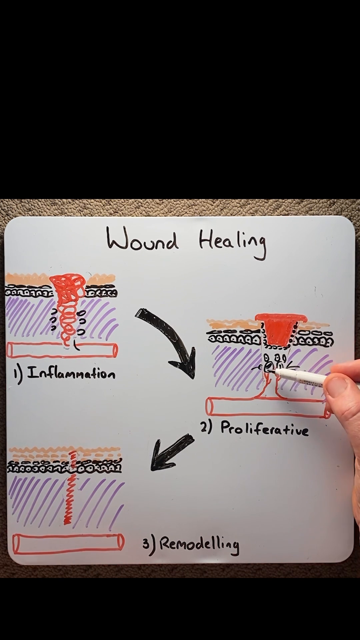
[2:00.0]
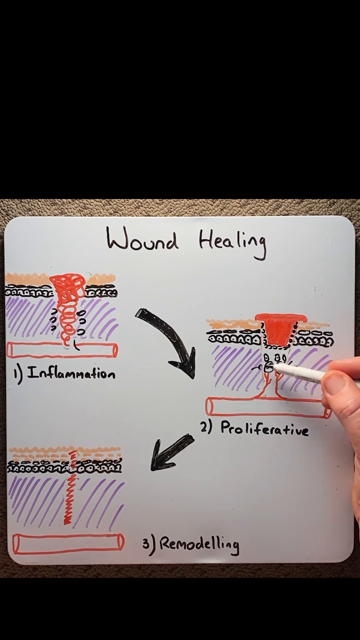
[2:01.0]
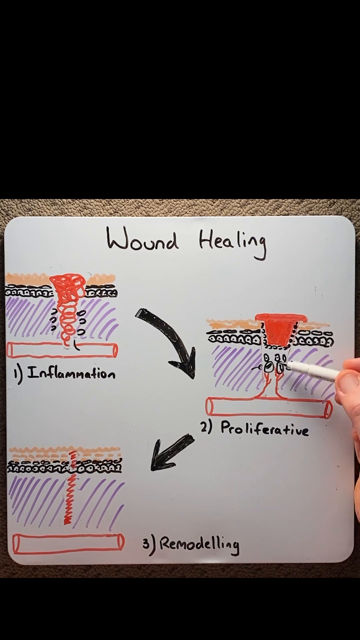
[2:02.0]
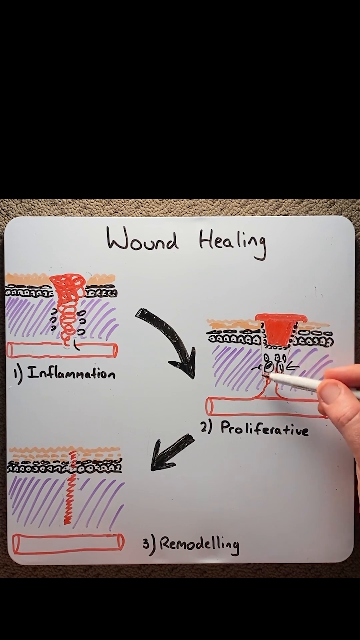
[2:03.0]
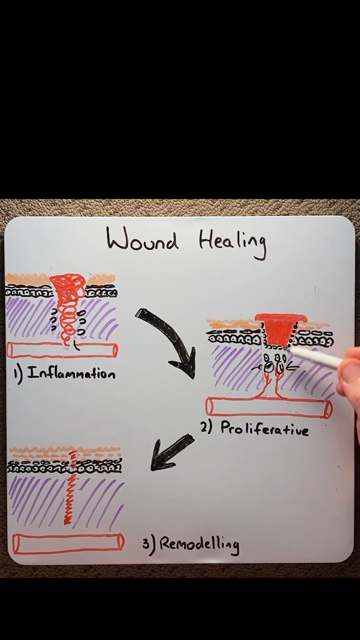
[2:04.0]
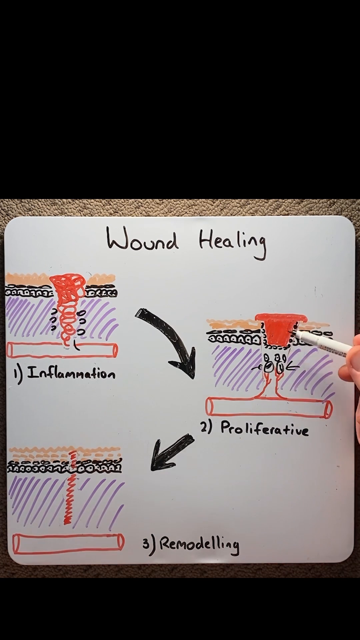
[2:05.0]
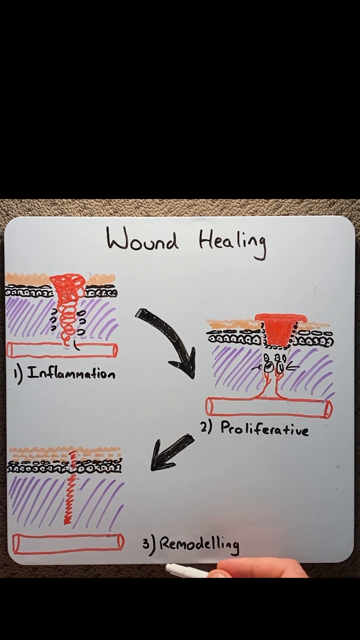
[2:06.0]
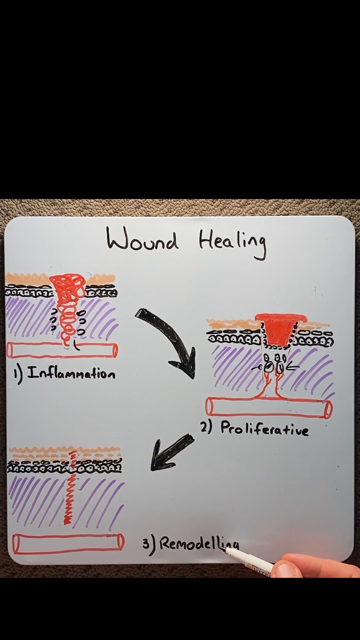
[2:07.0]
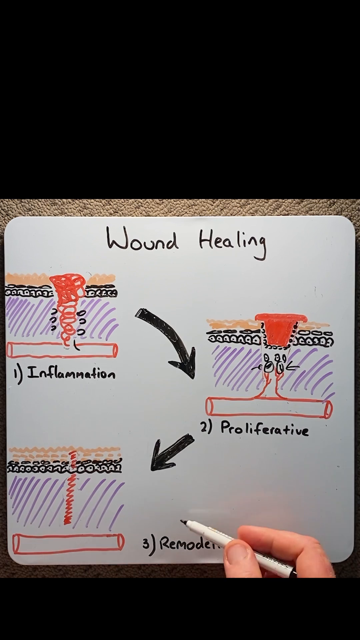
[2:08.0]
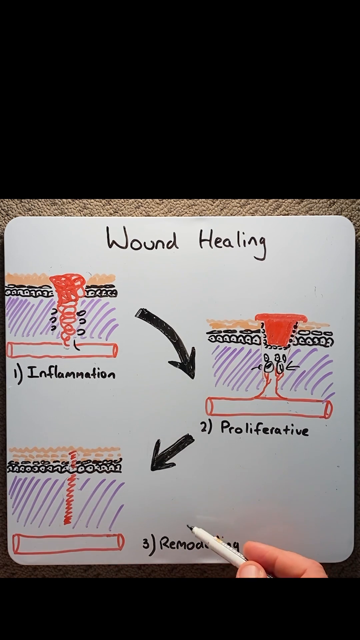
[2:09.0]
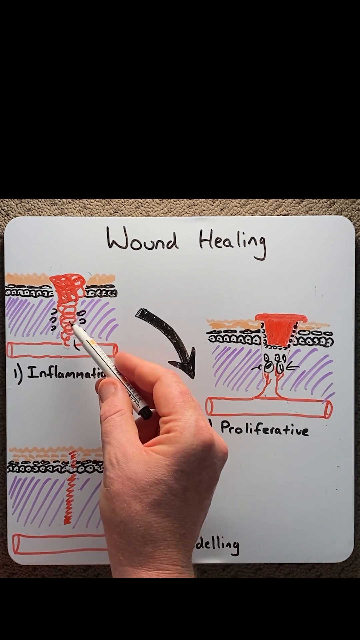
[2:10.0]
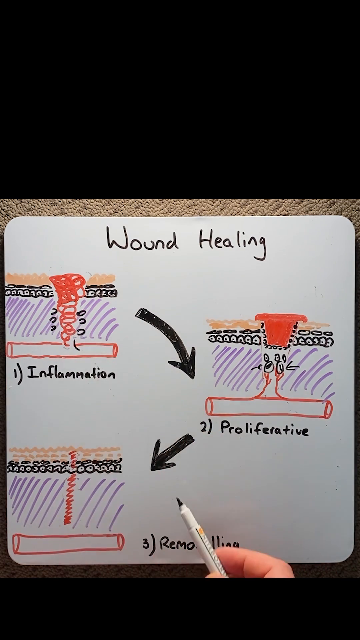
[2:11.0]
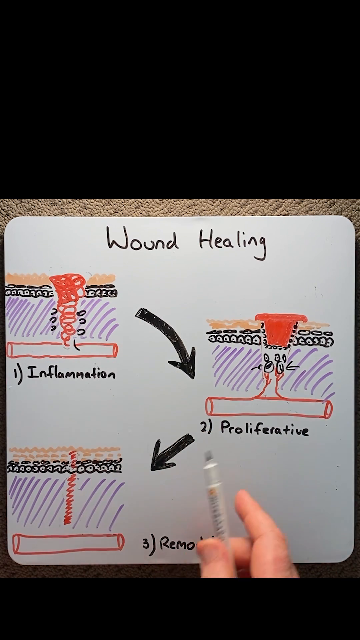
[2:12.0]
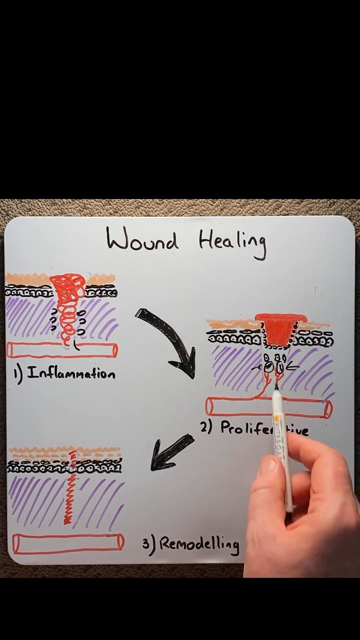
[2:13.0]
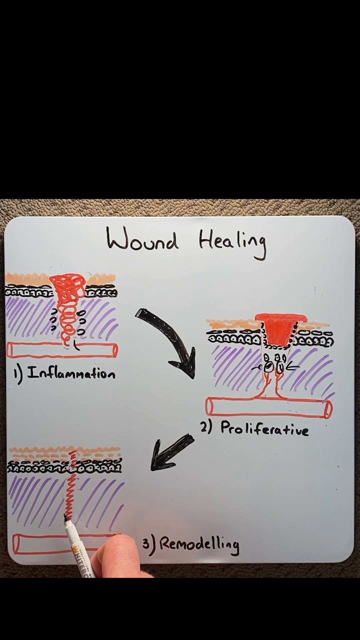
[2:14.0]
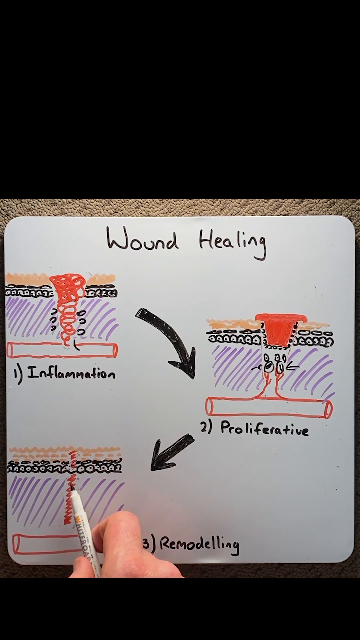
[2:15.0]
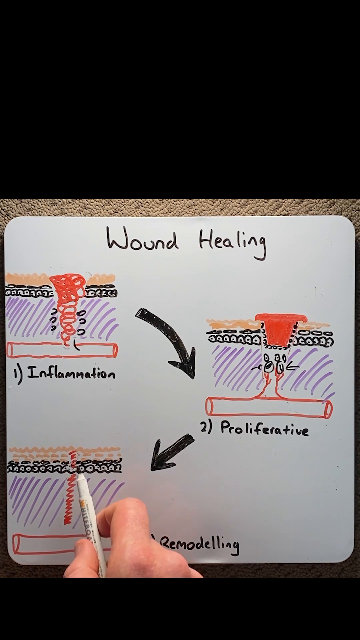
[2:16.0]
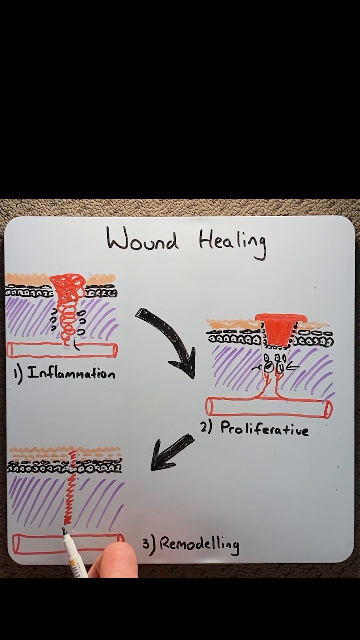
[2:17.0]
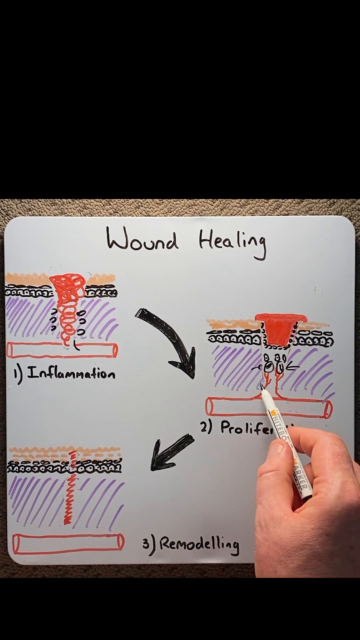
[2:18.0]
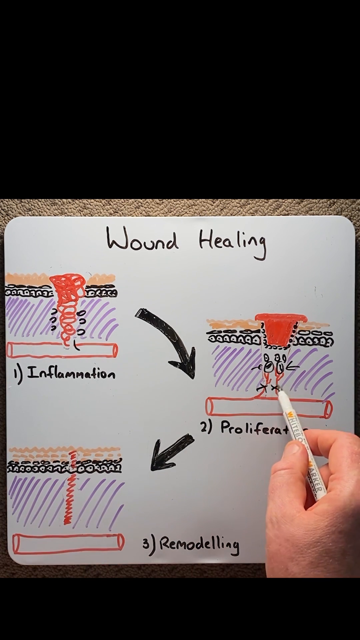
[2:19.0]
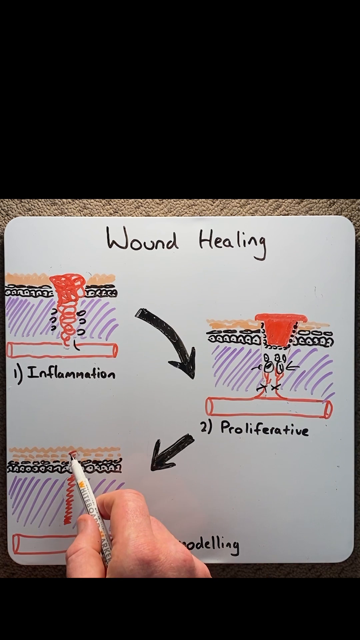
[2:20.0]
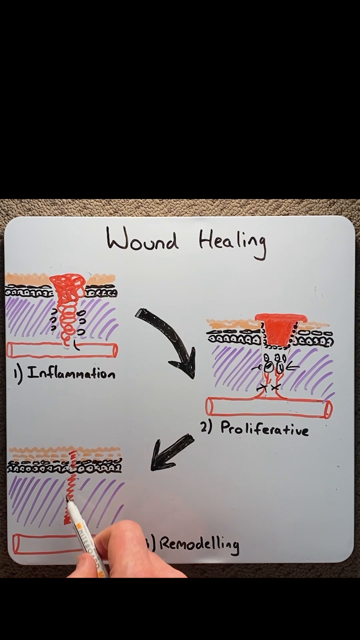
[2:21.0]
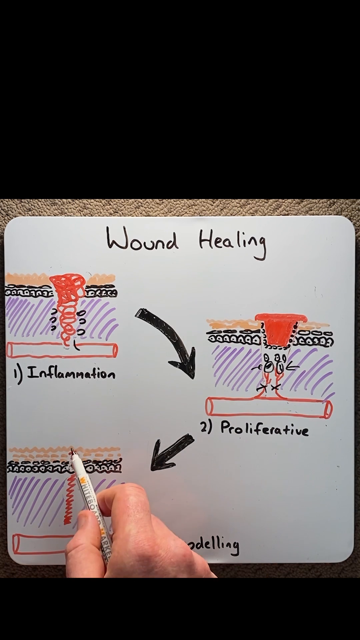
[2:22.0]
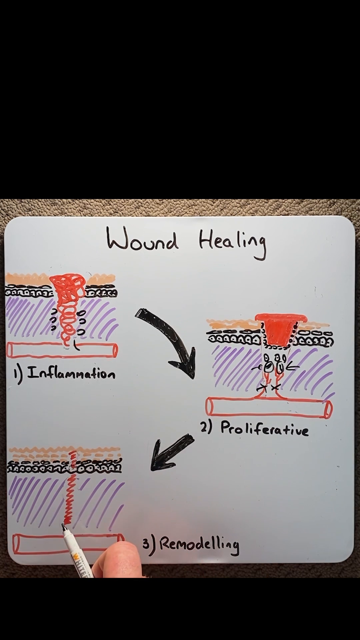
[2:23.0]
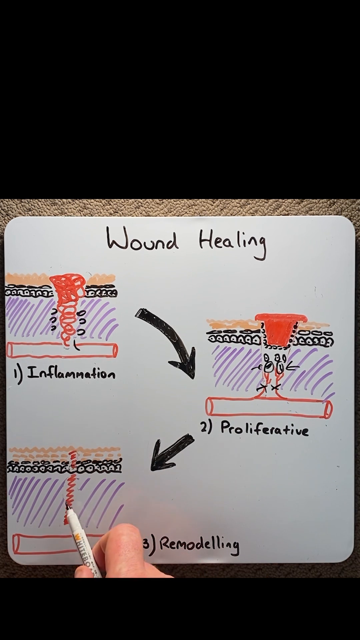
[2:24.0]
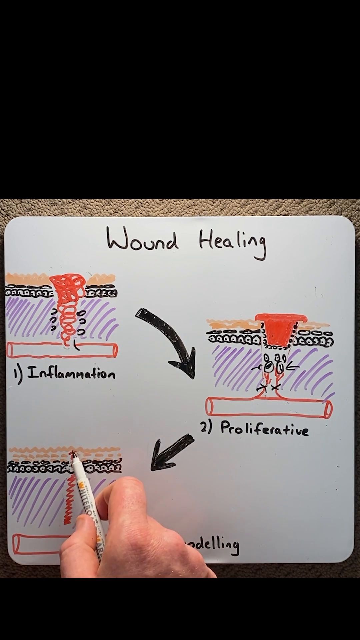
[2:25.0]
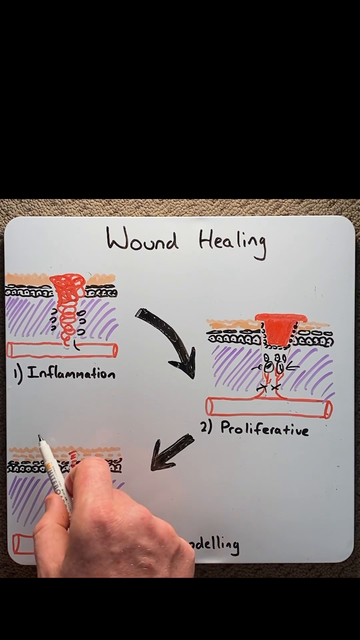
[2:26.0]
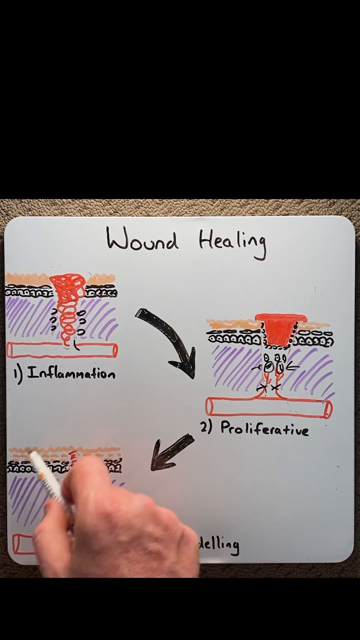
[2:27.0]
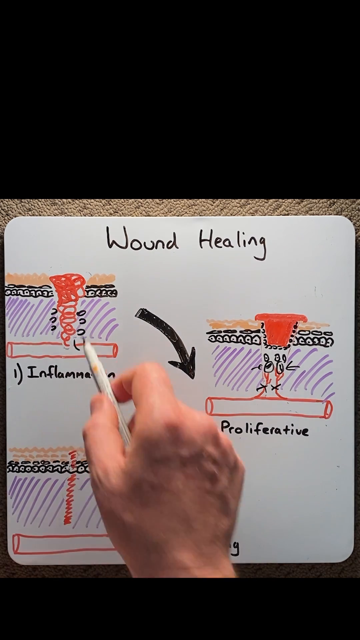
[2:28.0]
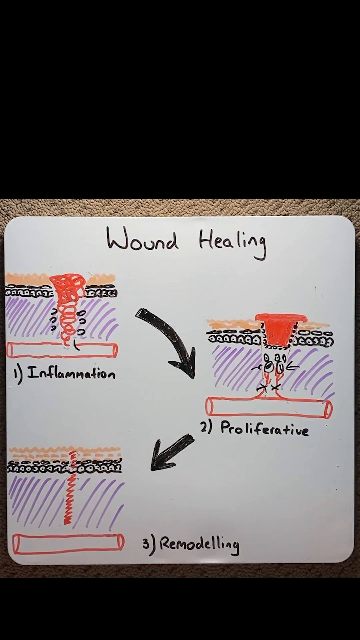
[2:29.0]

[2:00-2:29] The whiteboard explanation shows wound healing as a three-step process: inflammation first, proliferative second and remodeling third, each with a giant arrow pointing to the next in sequential order. The video is now at the last stage, remodeling, where the wound looks to have mostly finished healing and is kind of restructuring itself. The drawing is done on the whiteboard in red, purple, black and beige markers. In point-of-view style, only a man's hands are seen moving around, drawing things and gesturing to each point. Beige carpet is behind the whiteboard; it looks like the work was done on the floor rather than on a hung-up board like one found in a classroom.